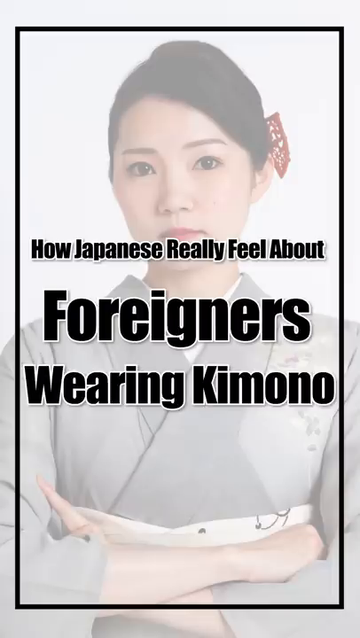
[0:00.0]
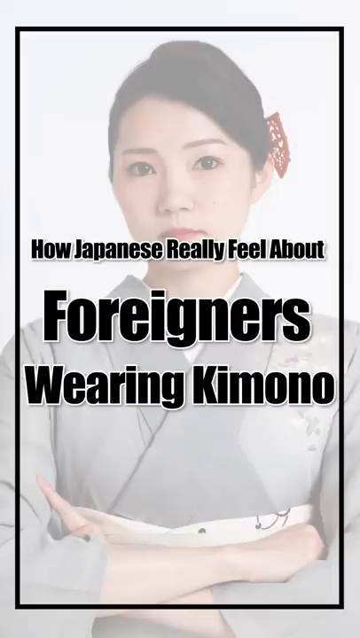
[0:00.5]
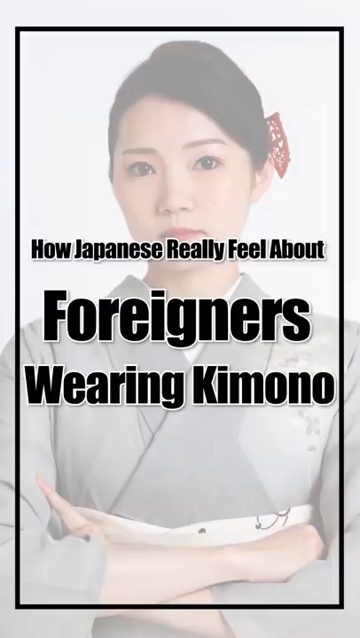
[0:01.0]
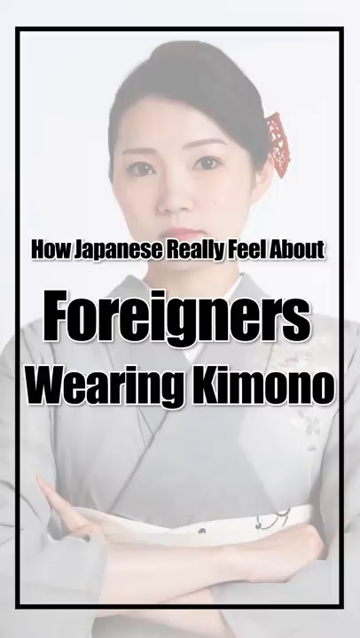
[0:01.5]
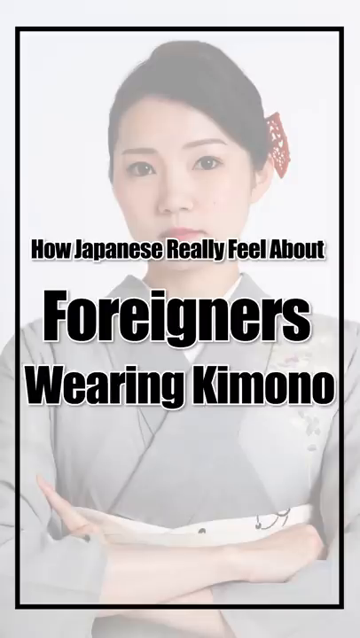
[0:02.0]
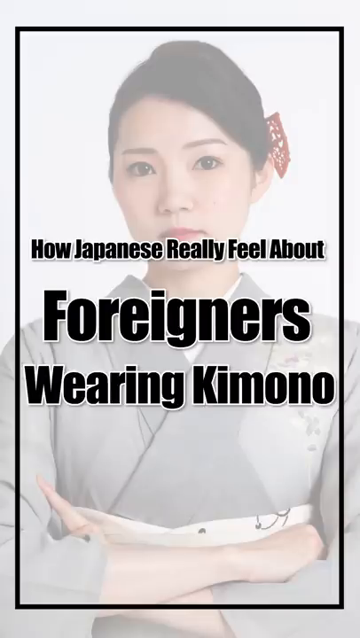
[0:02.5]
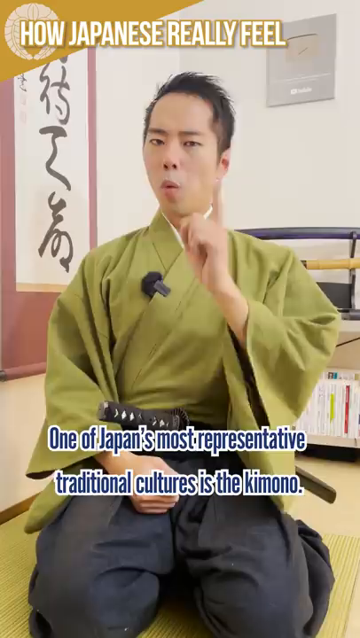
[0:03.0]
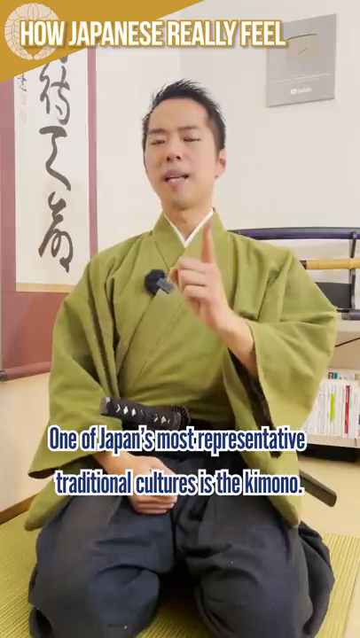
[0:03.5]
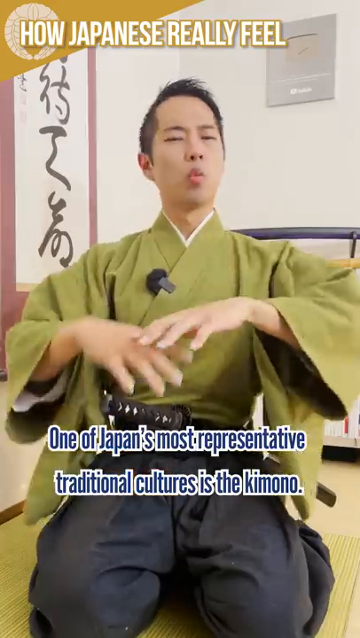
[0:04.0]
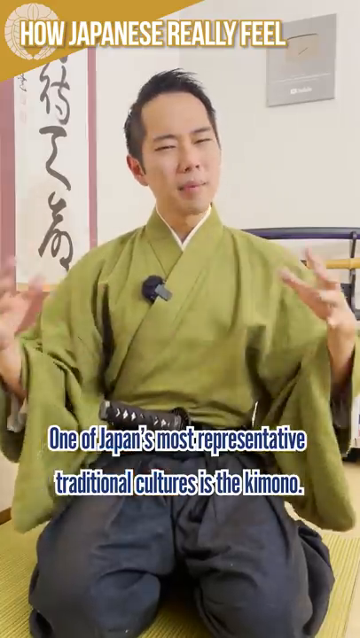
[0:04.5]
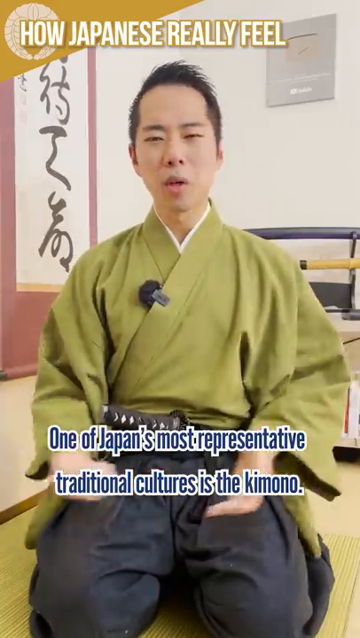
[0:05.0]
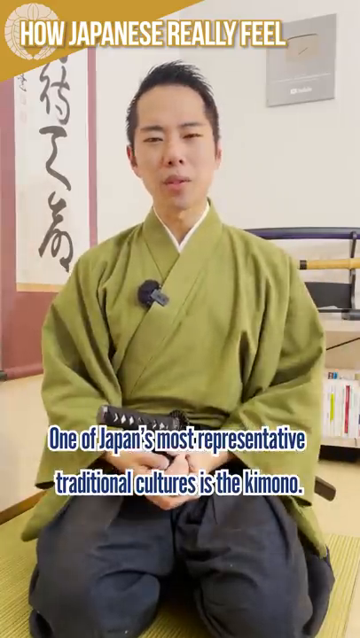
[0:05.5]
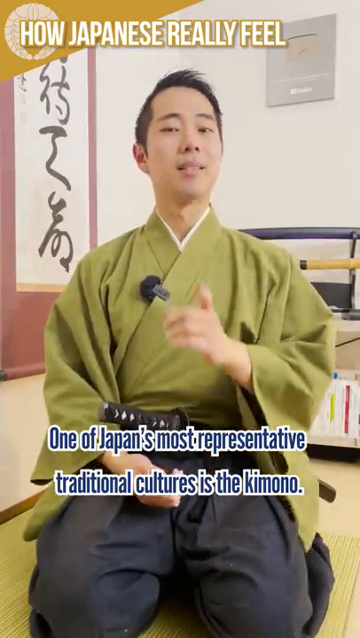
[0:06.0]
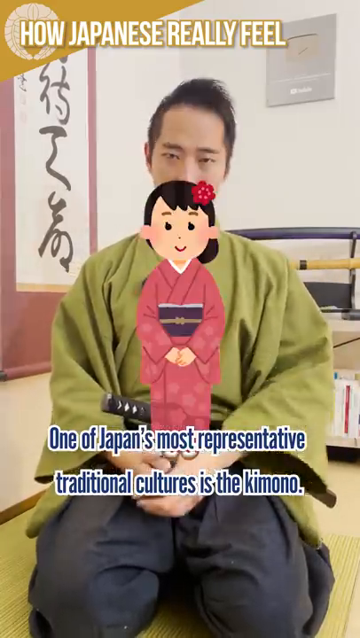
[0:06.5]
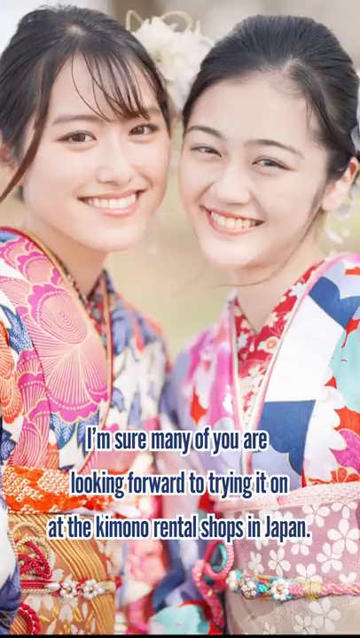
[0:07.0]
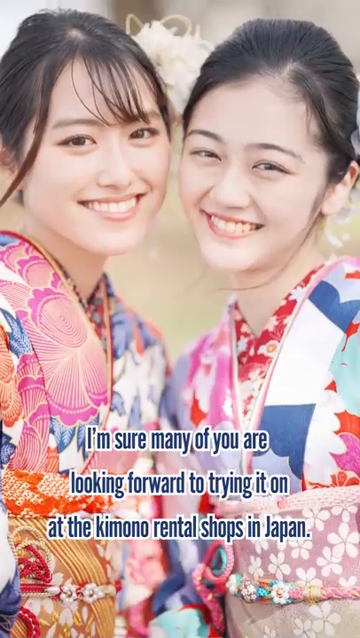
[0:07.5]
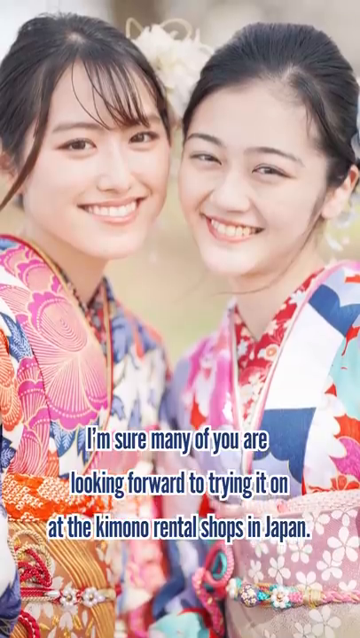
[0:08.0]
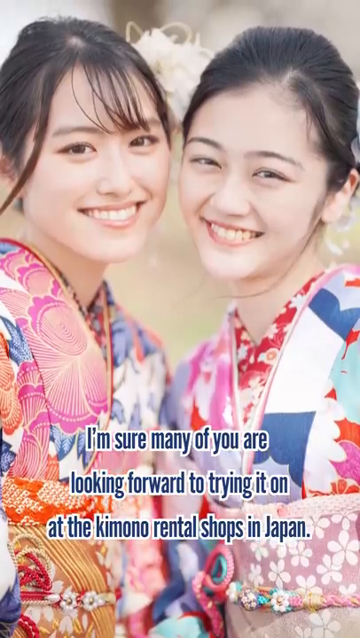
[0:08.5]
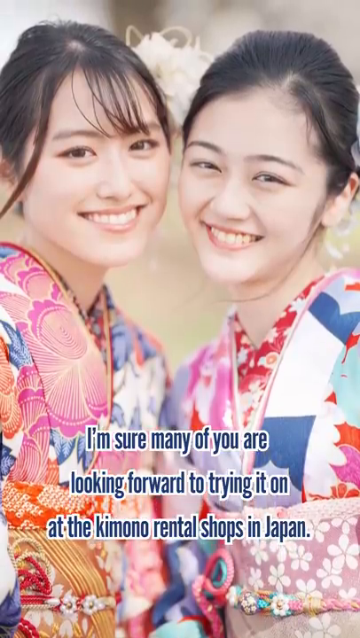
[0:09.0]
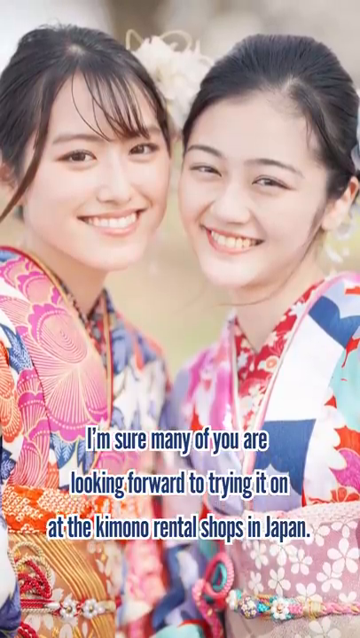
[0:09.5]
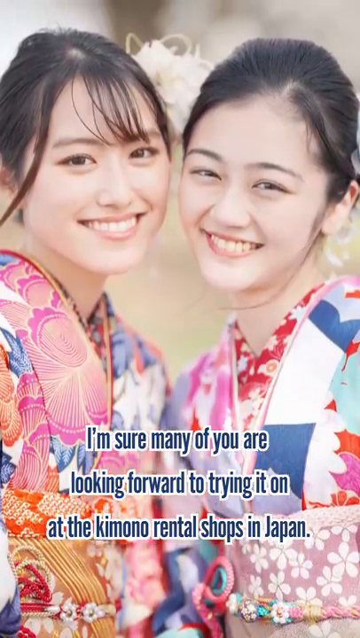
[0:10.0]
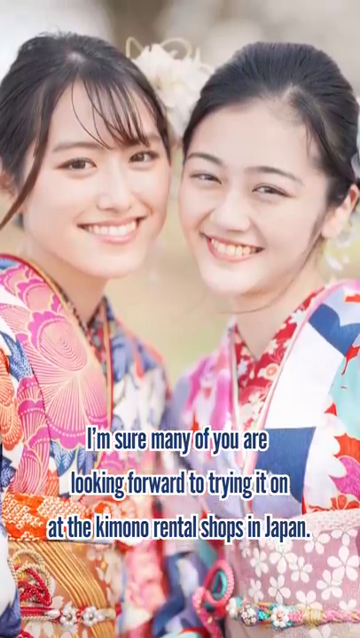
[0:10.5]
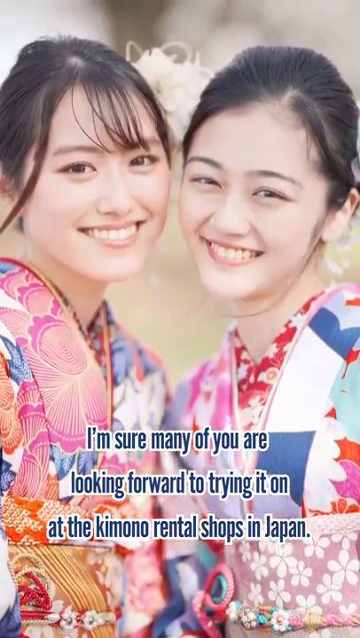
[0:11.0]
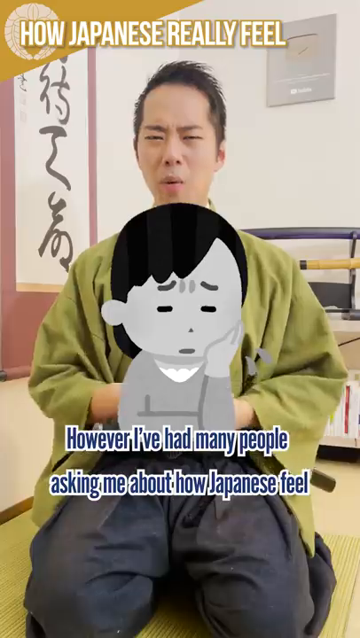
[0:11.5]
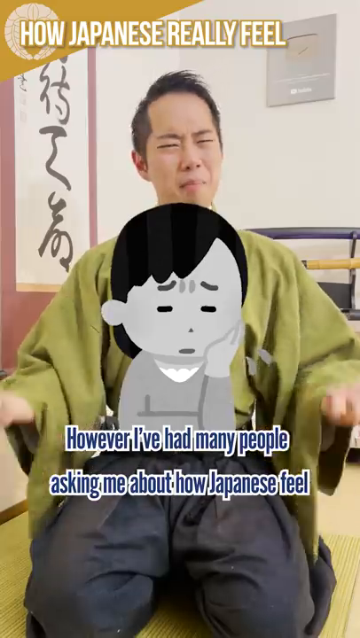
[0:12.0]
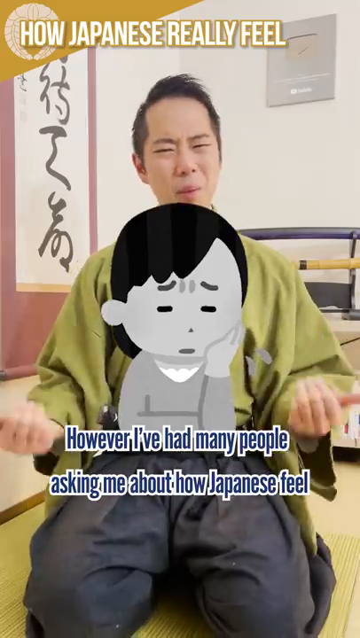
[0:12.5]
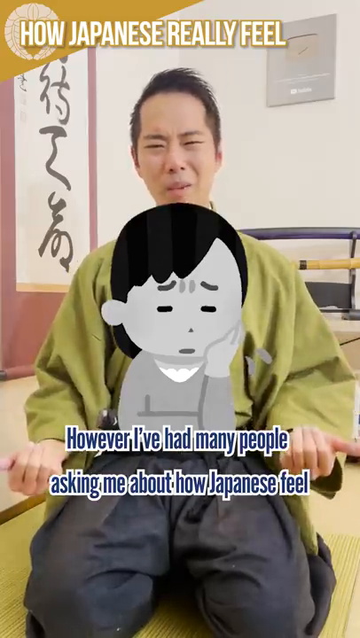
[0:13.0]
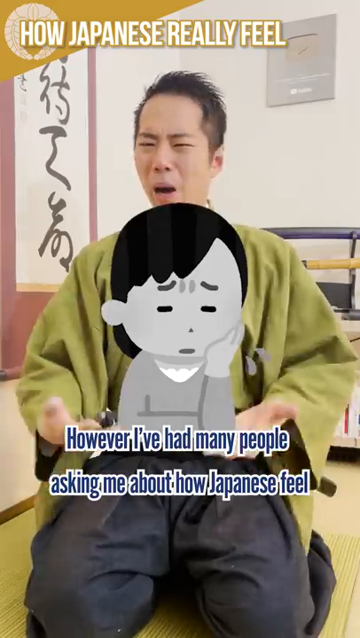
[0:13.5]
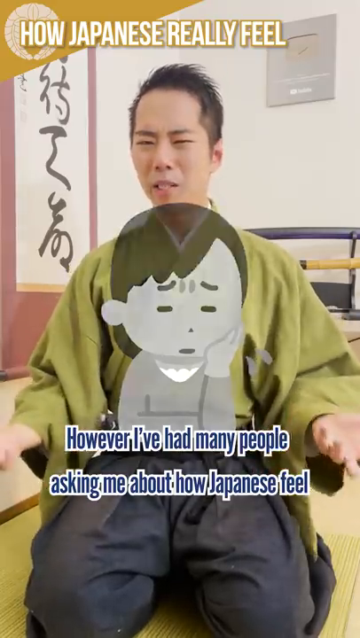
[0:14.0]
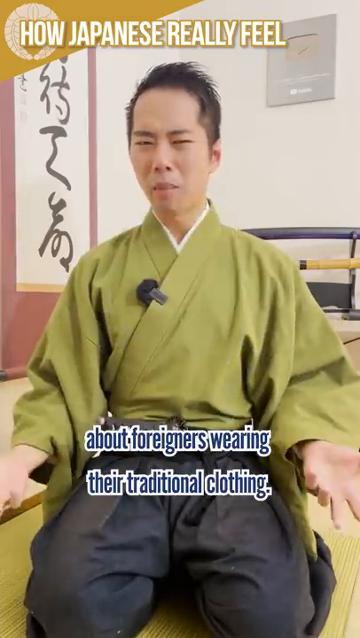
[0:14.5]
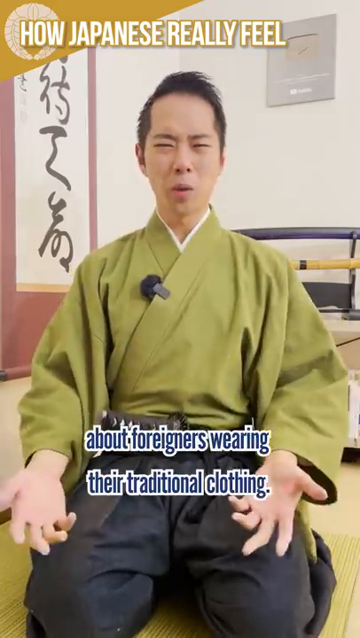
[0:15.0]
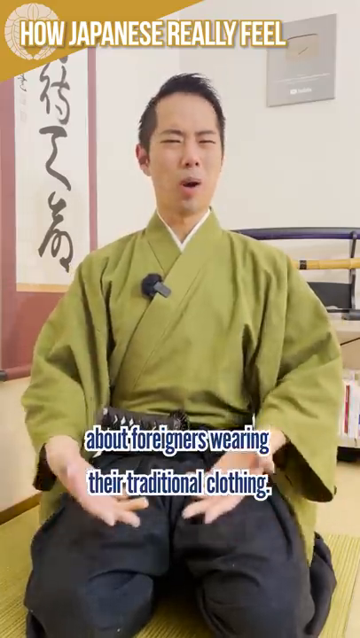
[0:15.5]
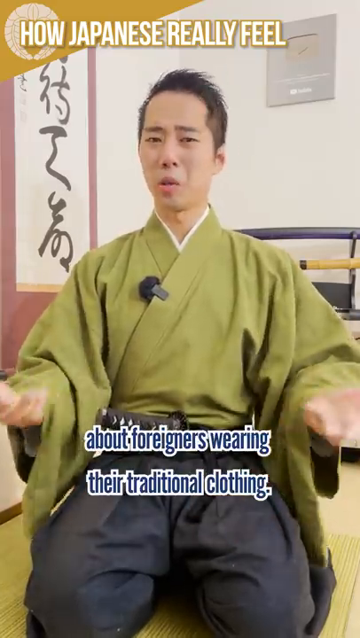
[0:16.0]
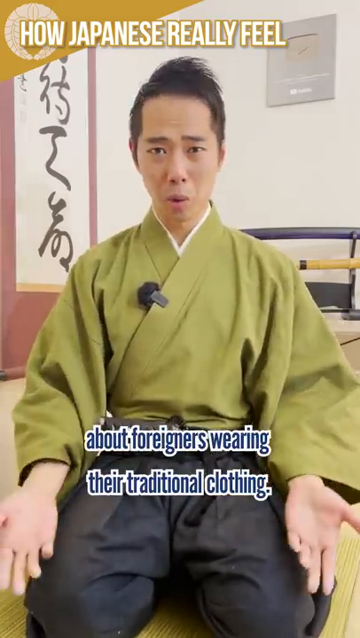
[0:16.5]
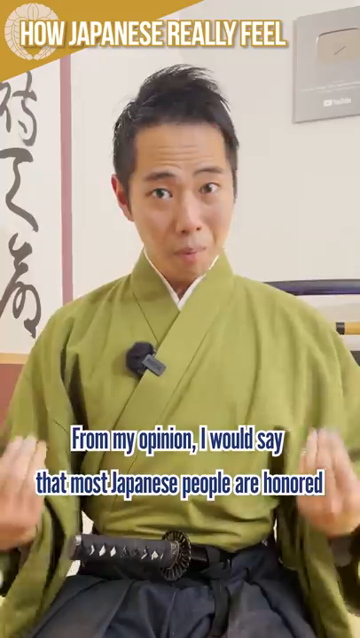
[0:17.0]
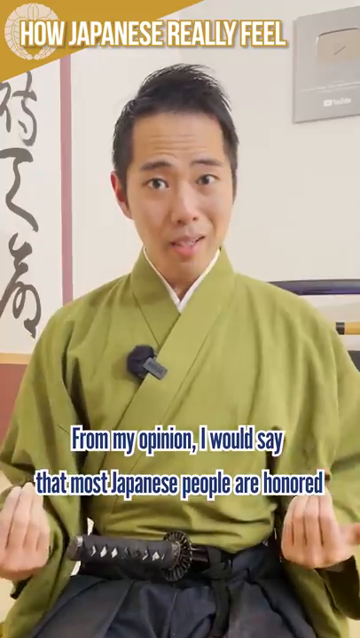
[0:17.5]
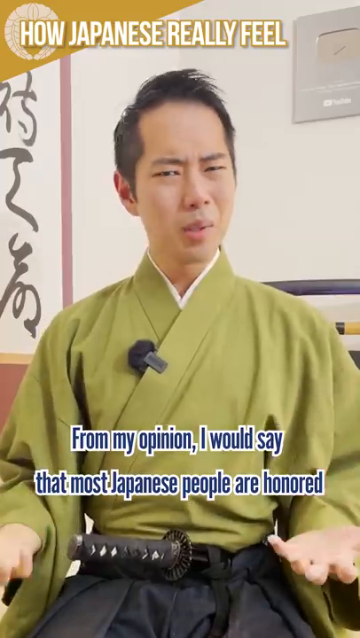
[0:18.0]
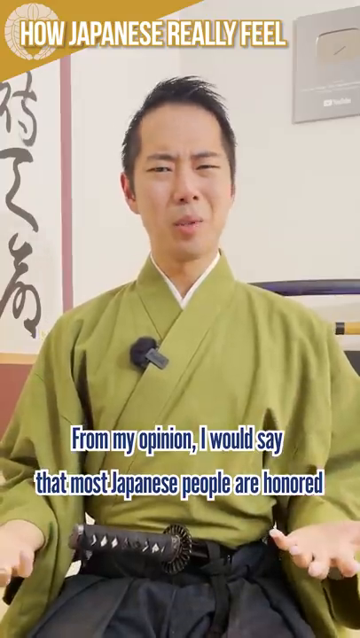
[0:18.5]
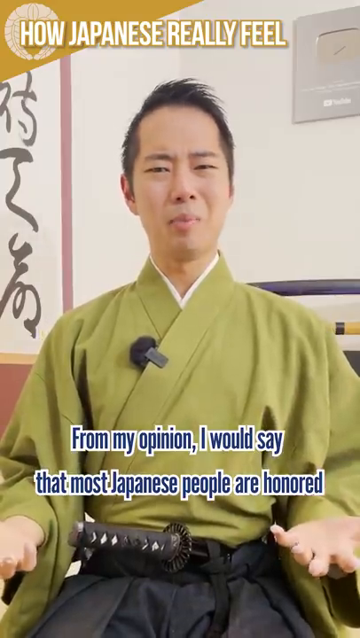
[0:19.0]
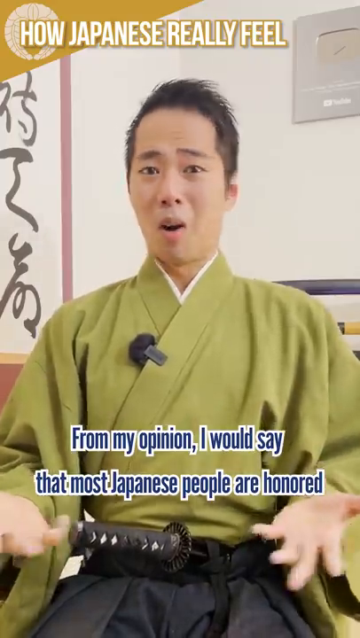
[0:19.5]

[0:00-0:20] The video opens with an image of a woman in a kimono, sort of in the background, with her arms crossed, while text in the foreground reads "how Japanese really feel about foreigners wearing kimono." Next, a man in sort of traditional Japanese attire appears, seemingly sitting down, with the text "one of Japan's most representative traditional folk cultures is the kimono." The text then reads "I'm sure many of you are looking forward to trying it on at the kimono rental shops in Japan" as two women are shown, kind of smiling. A sort of sad cartoon character, apparently a woman, appears with the text "however I've had many people asking me about how Japanese feel about foreigners wearing their traditional clothing." Then the text reads "from my opinion I would say that most Japanese people are honored."